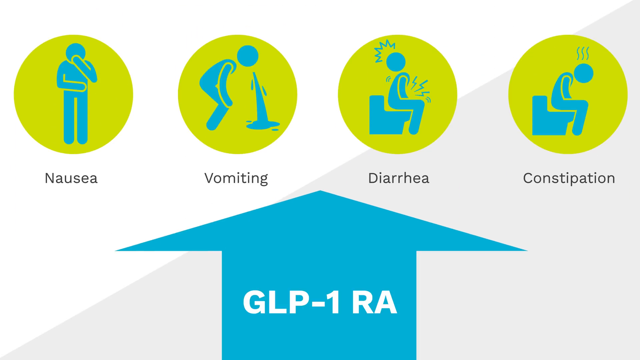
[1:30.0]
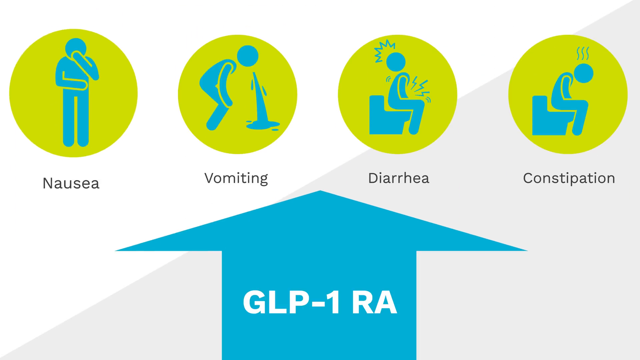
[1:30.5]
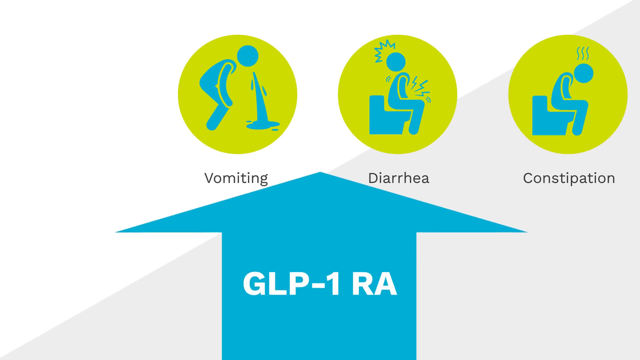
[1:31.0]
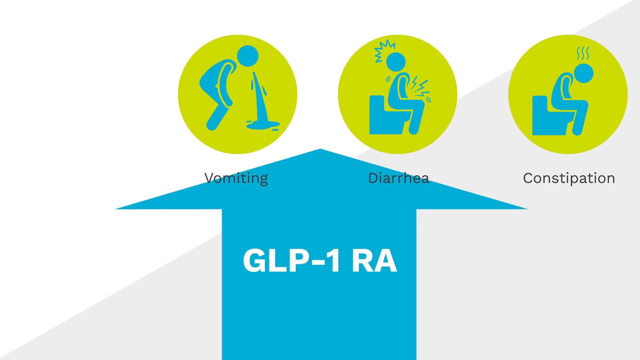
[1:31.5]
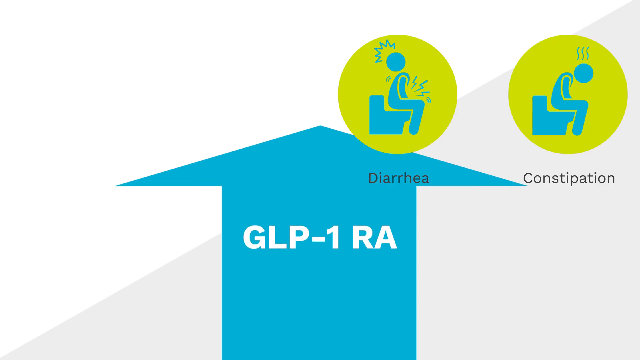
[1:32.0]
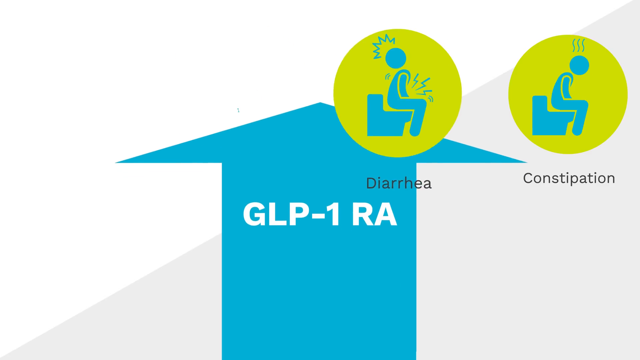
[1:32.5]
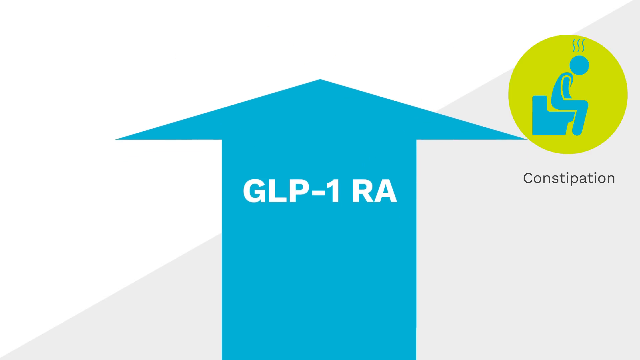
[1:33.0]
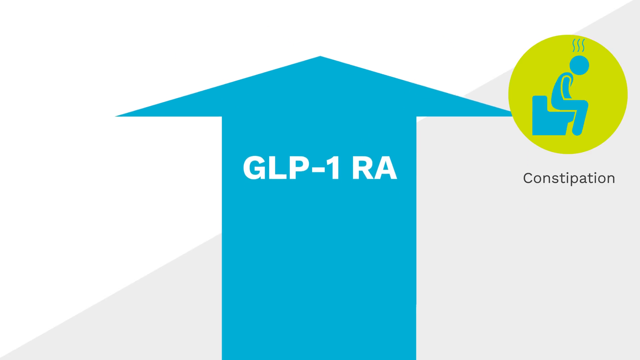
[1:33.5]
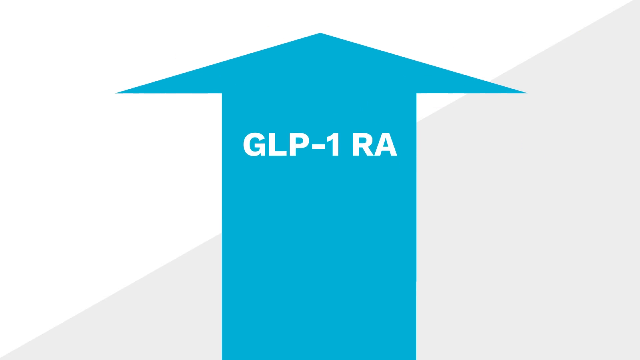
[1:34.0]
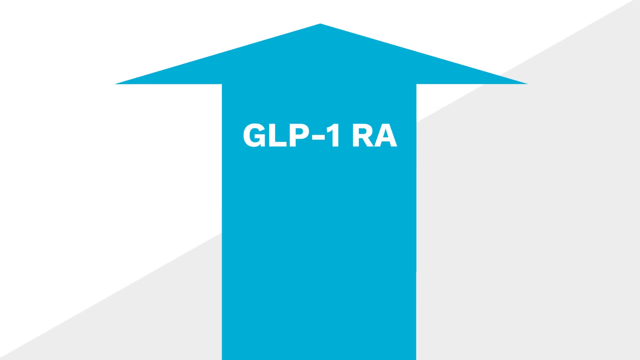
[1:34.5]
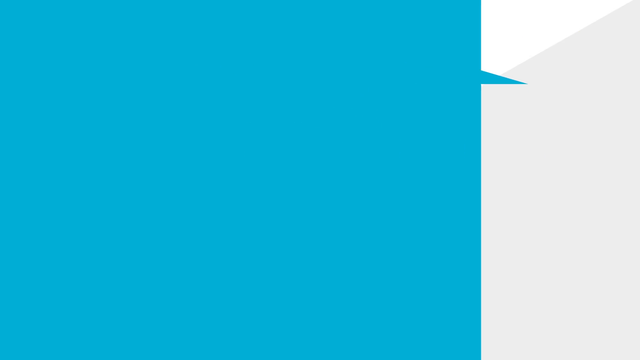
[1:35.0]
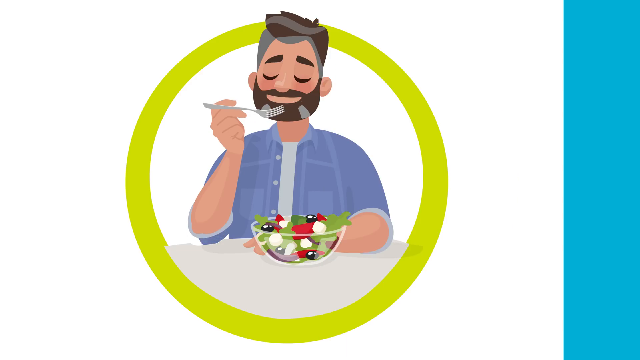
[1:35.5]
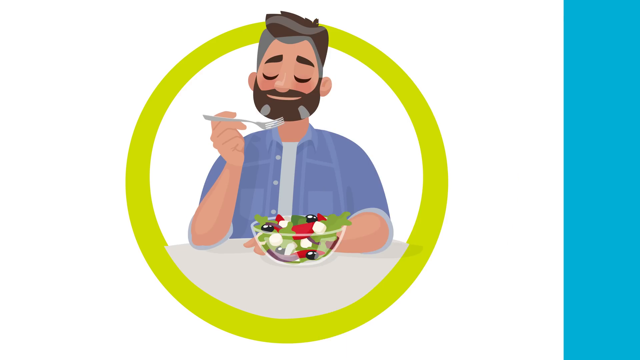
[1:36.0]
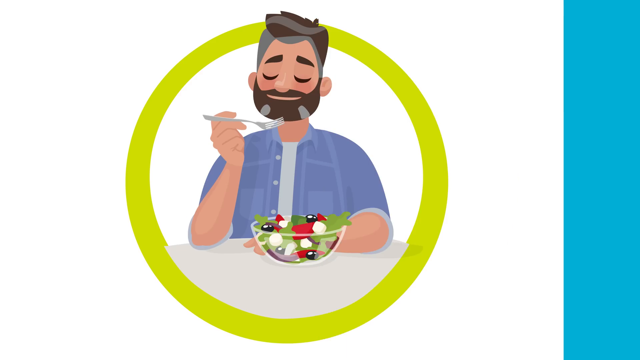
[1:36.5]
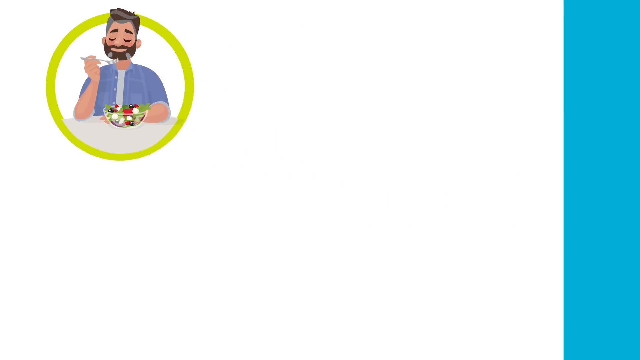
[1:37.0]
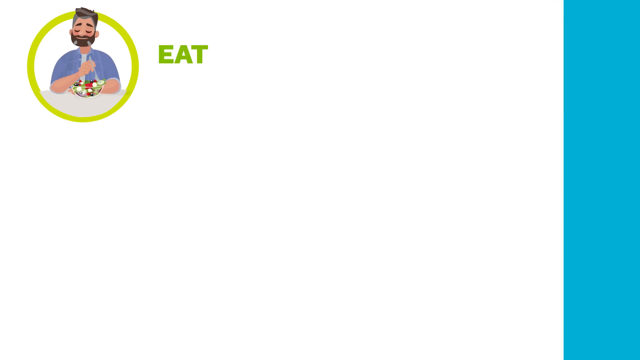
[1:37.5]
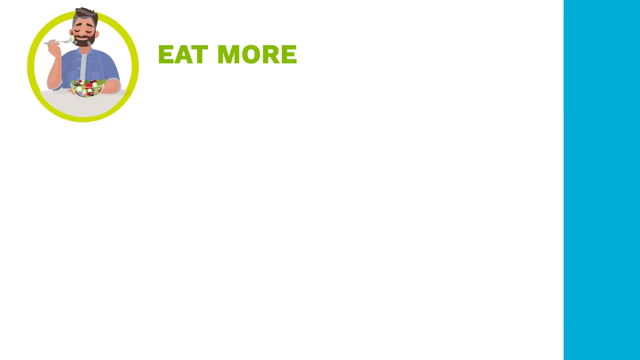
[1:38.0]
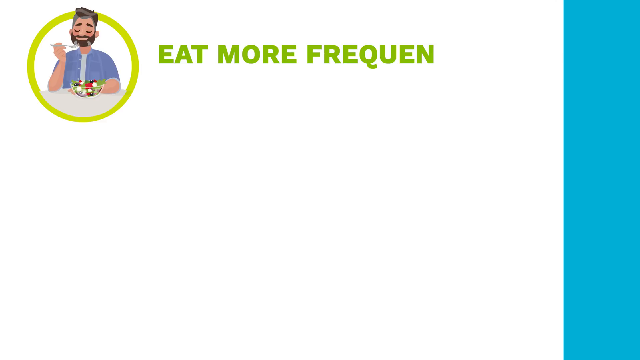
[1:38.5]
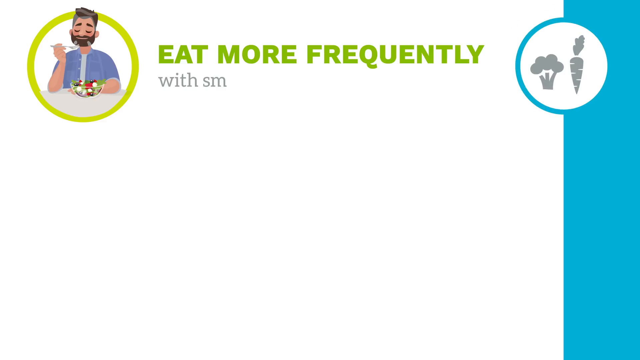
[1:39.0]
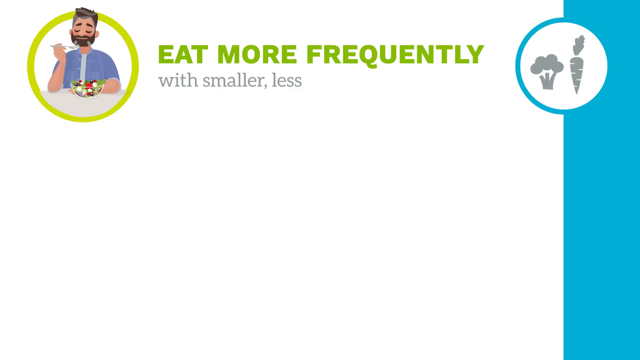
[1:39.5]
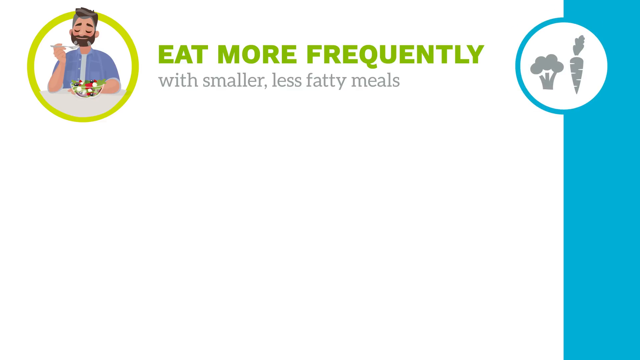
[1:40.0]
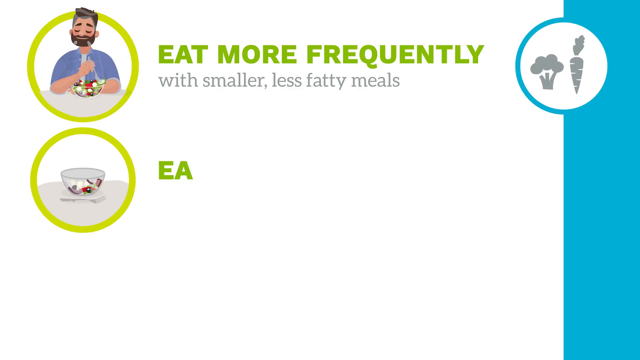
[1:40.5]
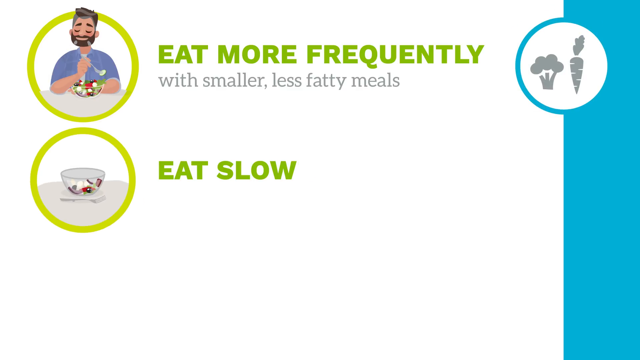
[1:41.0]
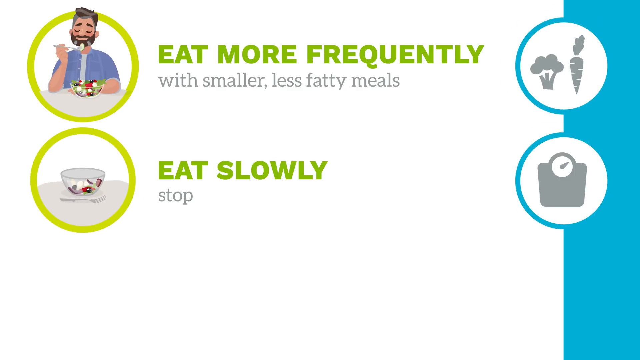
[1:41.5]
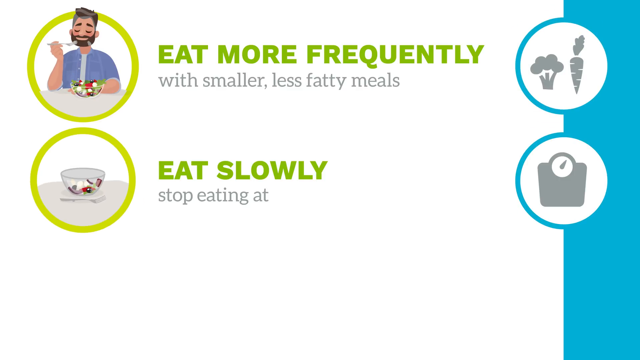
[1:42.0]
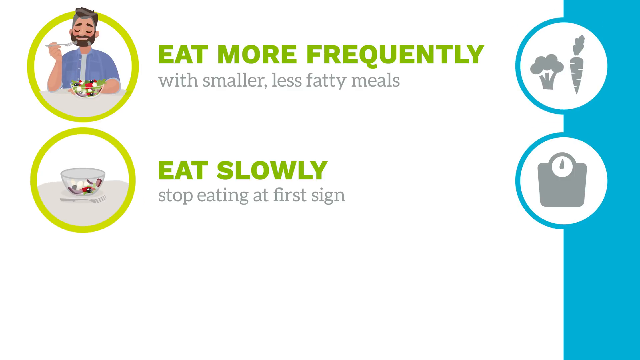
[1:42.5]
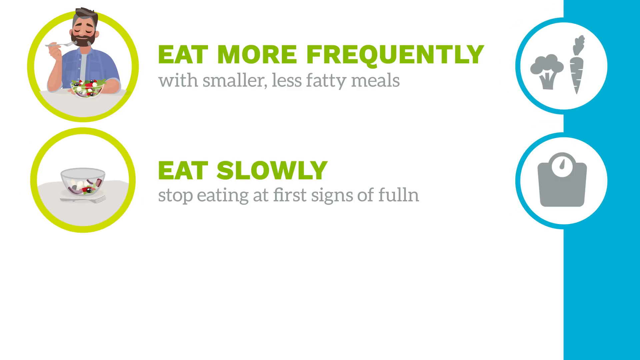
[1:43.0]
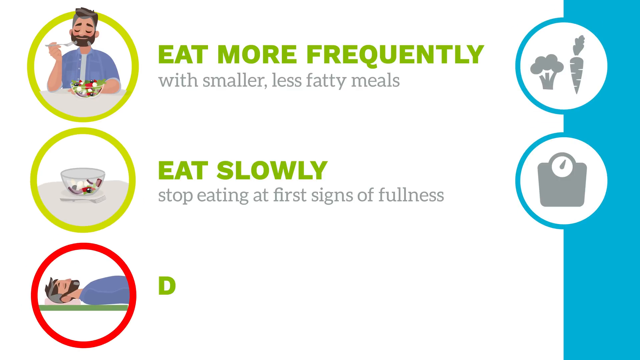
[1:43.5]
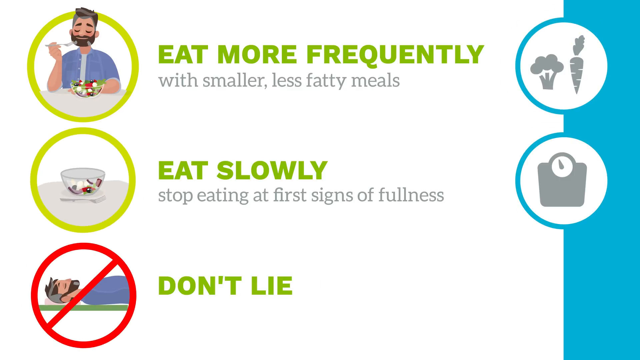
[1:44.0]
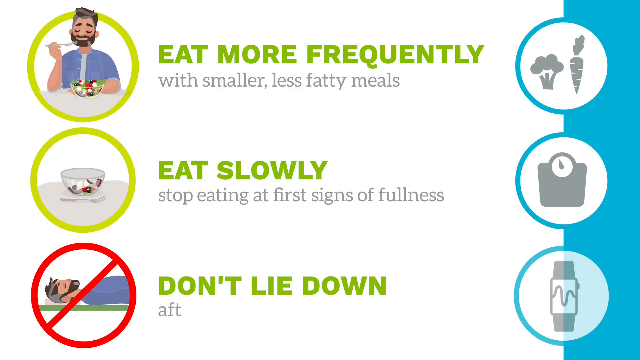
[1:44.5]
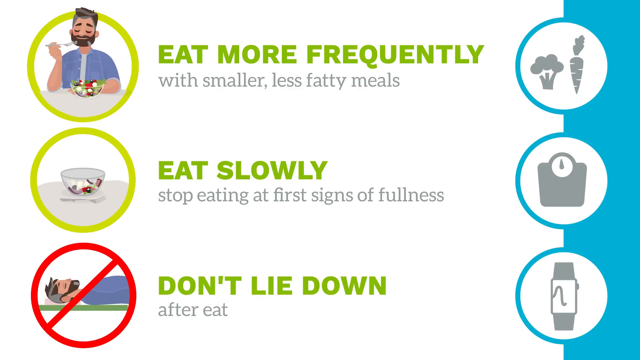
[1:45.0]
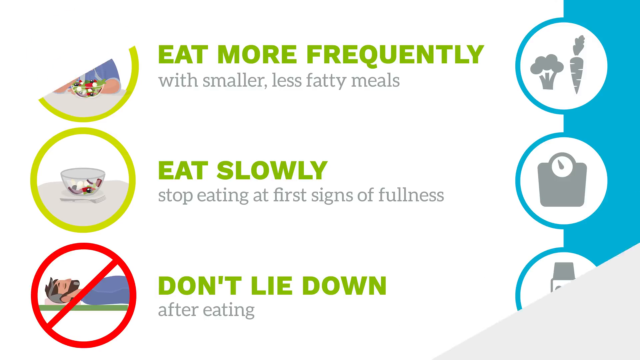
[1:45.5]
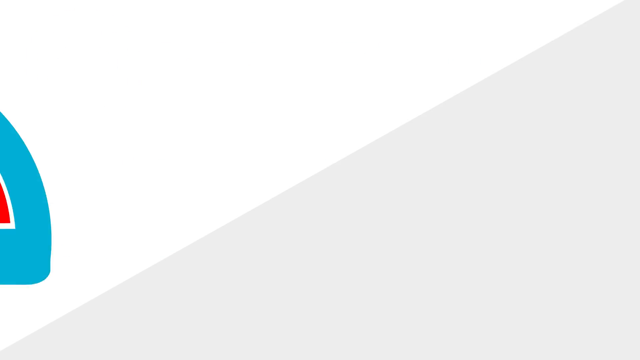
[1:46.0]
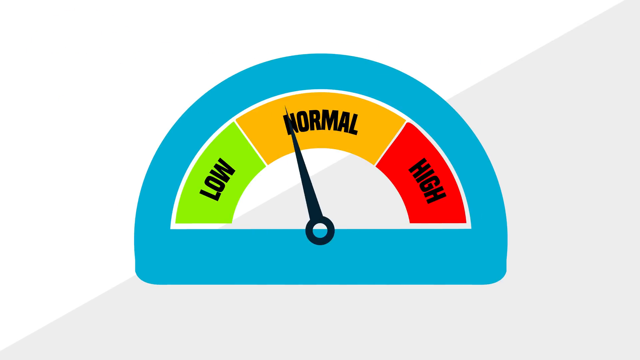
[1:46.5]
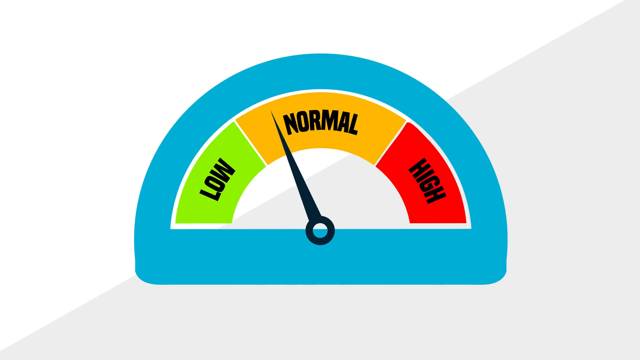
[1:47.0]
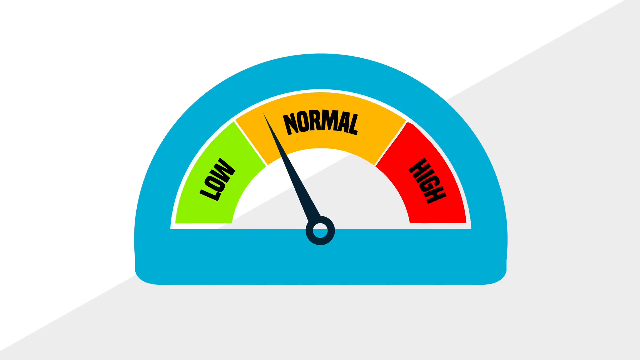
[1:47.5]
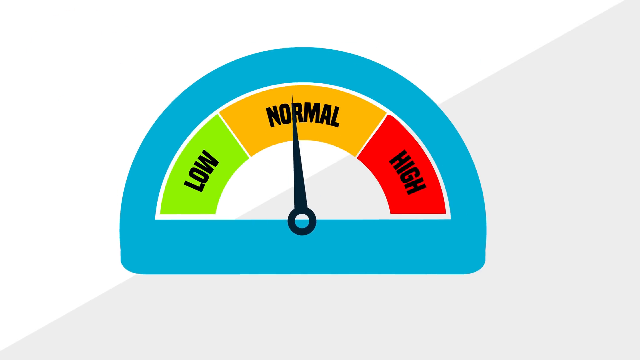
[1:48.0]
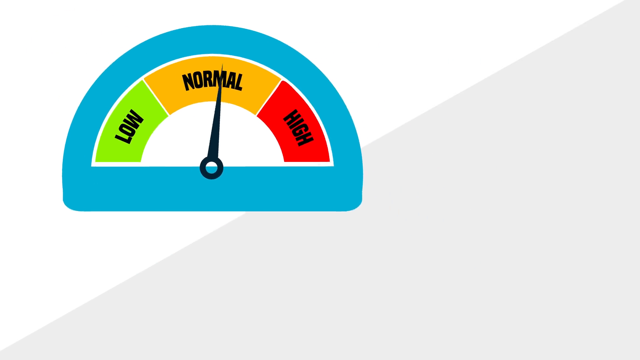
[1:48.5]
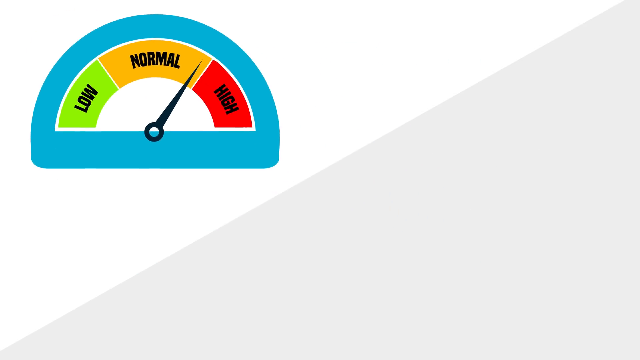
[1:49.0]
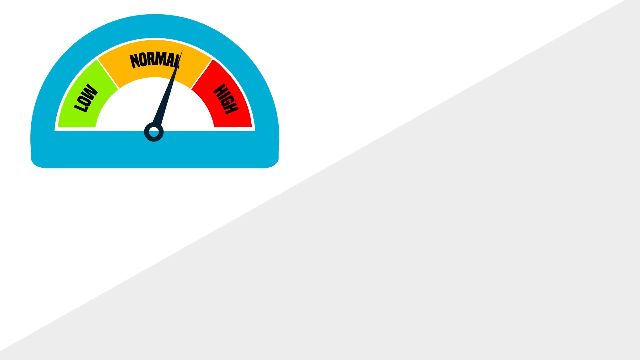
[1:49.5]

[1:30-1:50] A slide with a diagonally cut half-white, half-gray background shows four green circles containing blue caricatures of people, labeled nausea, vomiting, diarrhea, and constipation. "GLP1RA" appears with an arrow going up toward them, indicating these can be side effects of GLP-1 RAs. The video then cuts to a man with a beard, mustache, and black hair eating what looks like a bowl of tossed salad with multiple ingredients, while eating advice appears: "eat more frequently, eat smaller meals, chew your food slowly and don't lie down after eating." Next, a dial with a needle appears, going from green (low) through orange (normal) to red (high), and the needle starts to move from normal to high.